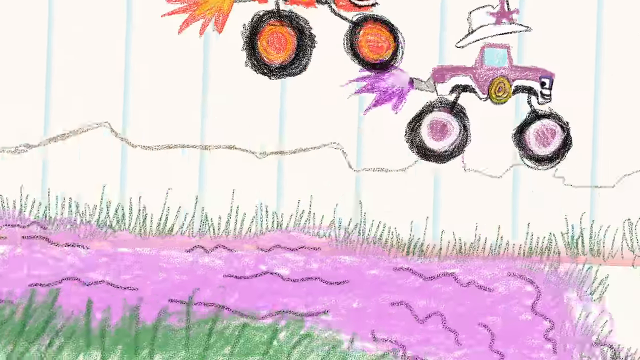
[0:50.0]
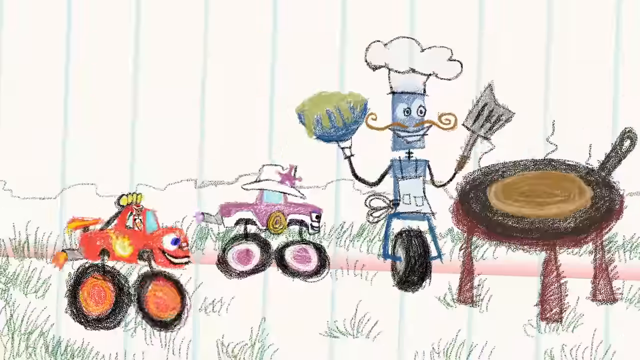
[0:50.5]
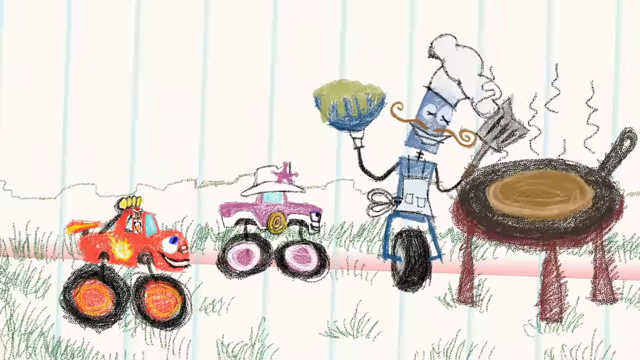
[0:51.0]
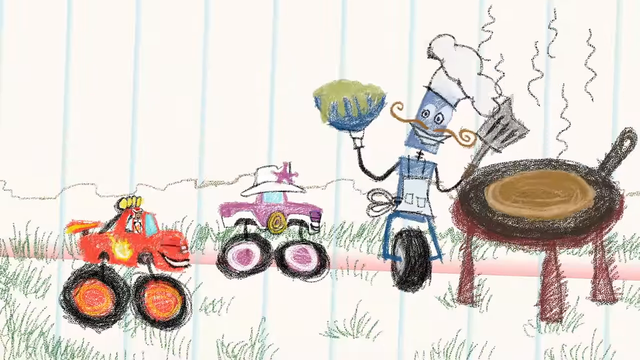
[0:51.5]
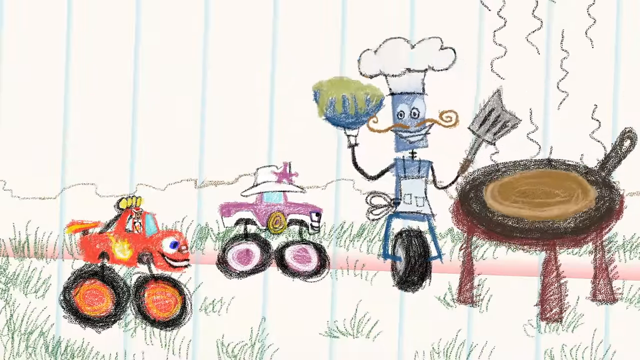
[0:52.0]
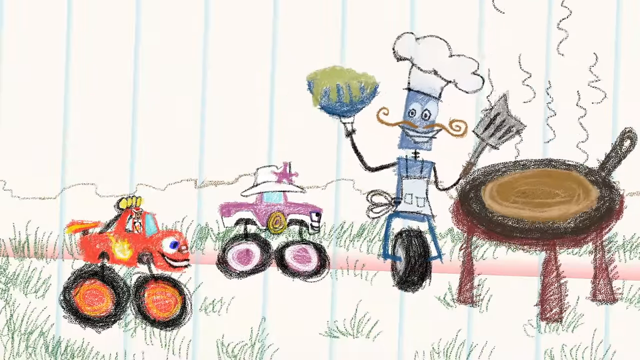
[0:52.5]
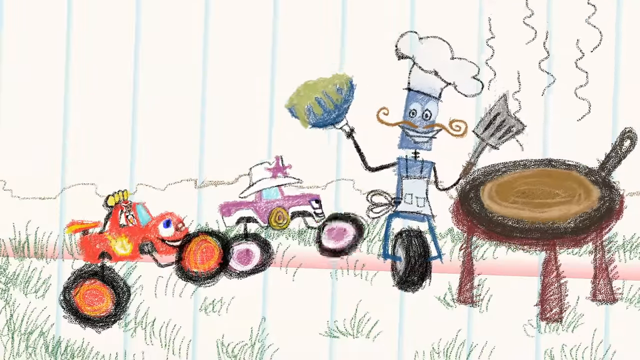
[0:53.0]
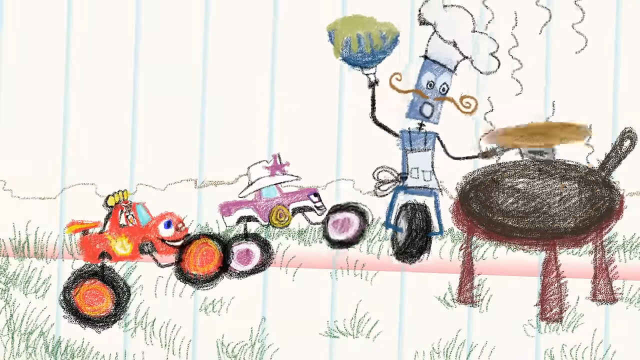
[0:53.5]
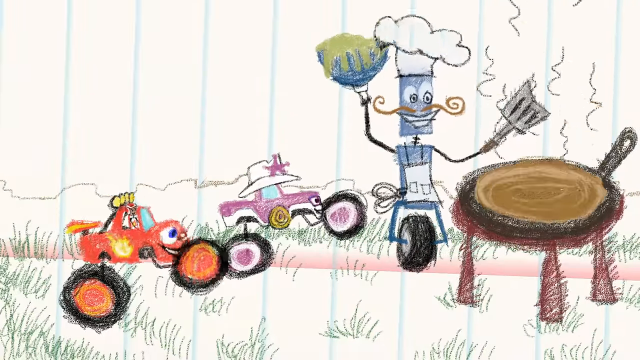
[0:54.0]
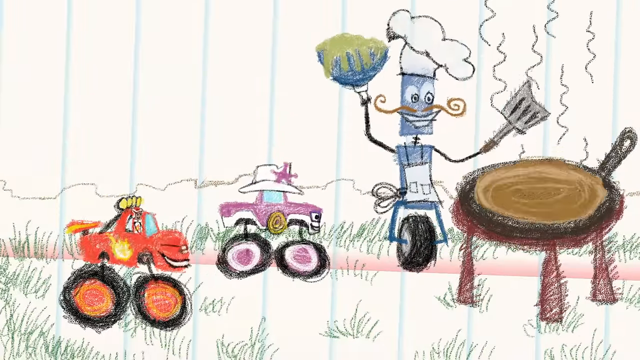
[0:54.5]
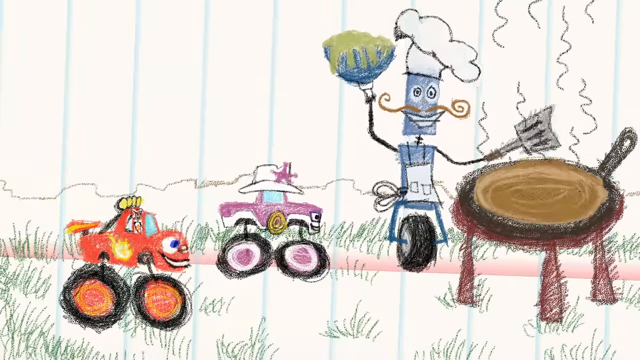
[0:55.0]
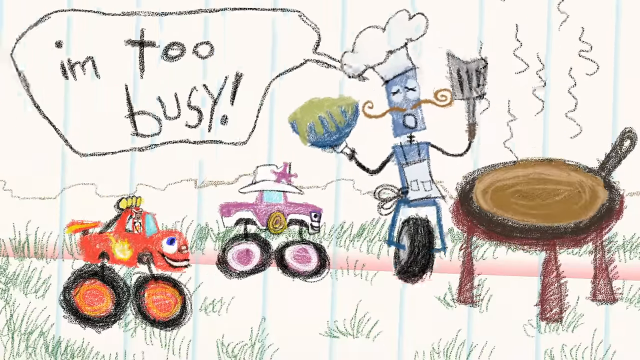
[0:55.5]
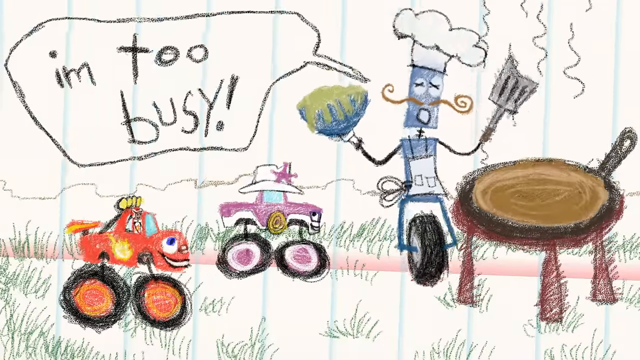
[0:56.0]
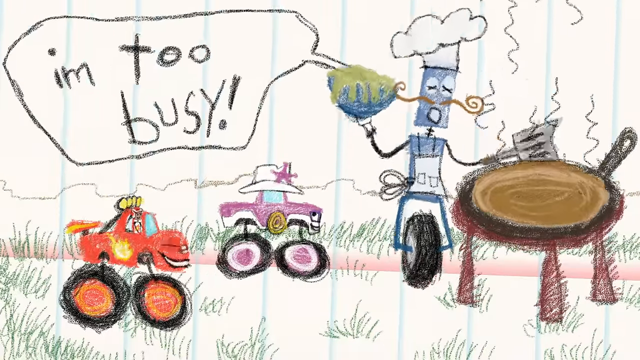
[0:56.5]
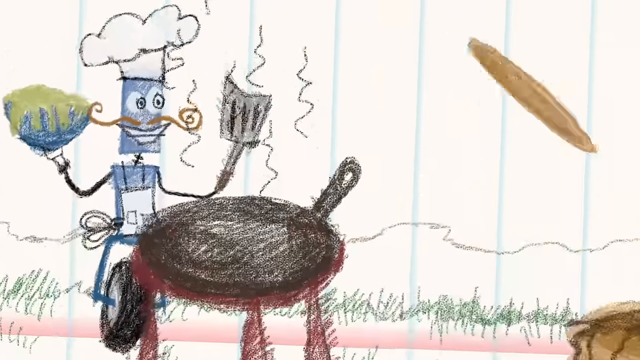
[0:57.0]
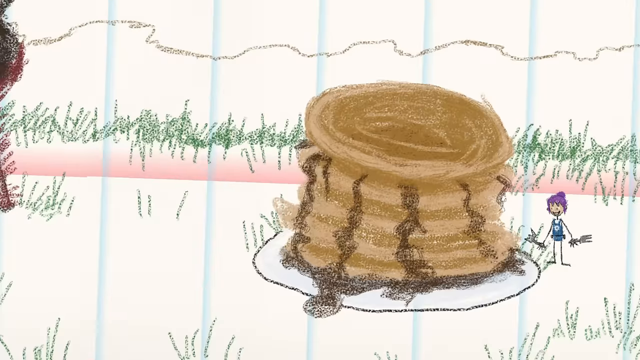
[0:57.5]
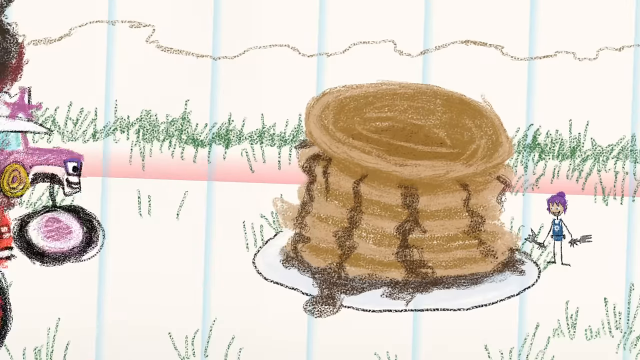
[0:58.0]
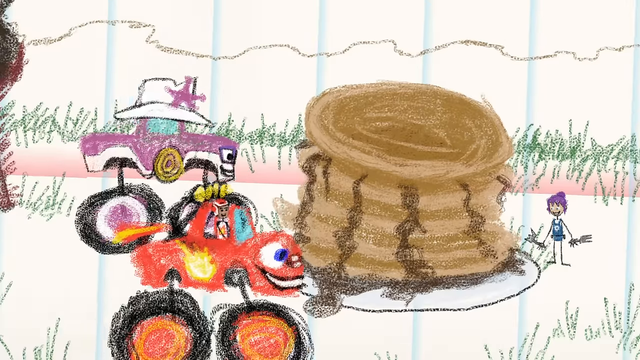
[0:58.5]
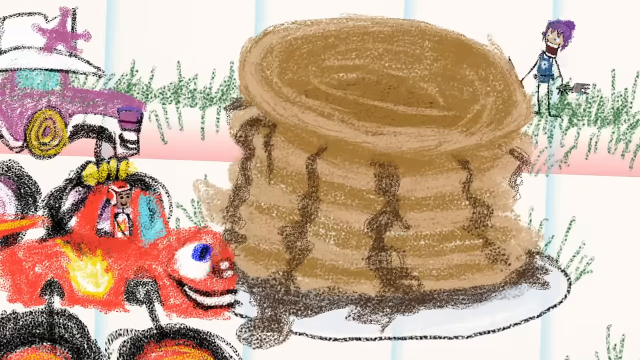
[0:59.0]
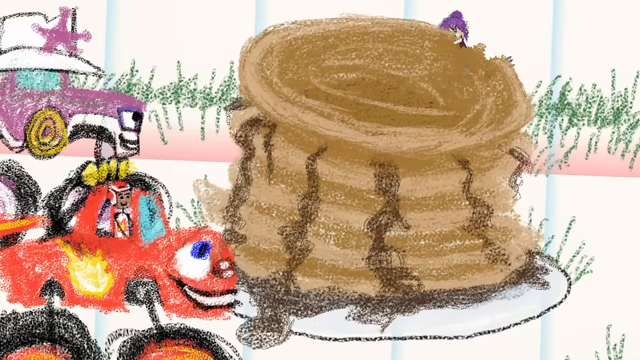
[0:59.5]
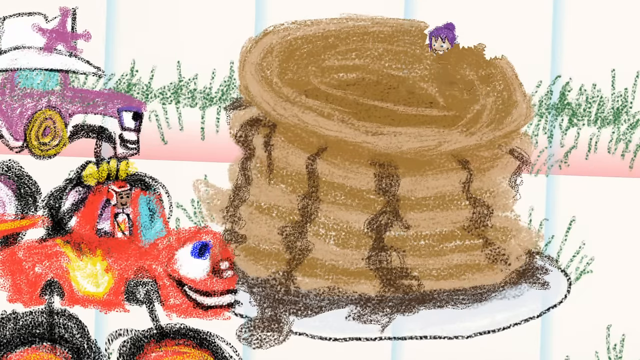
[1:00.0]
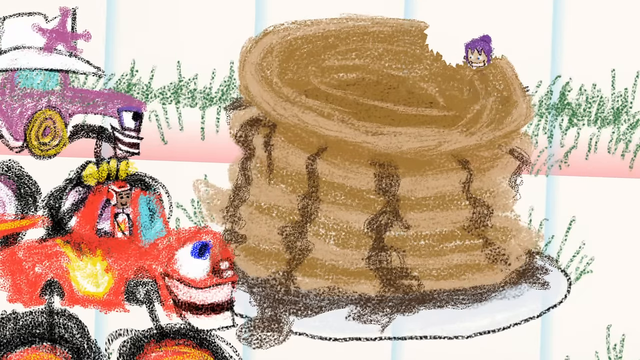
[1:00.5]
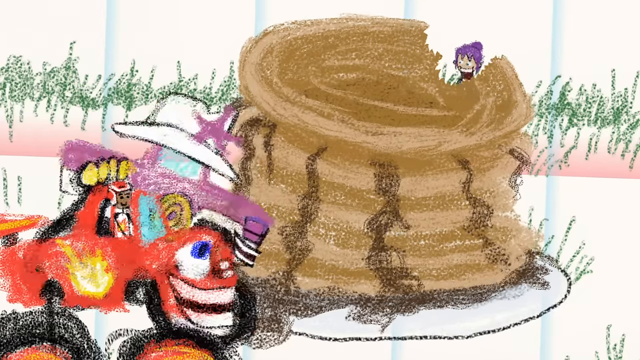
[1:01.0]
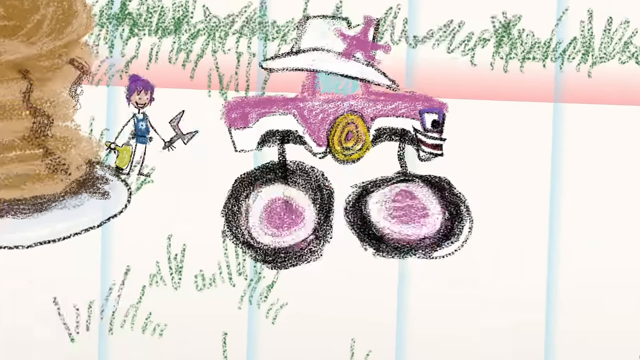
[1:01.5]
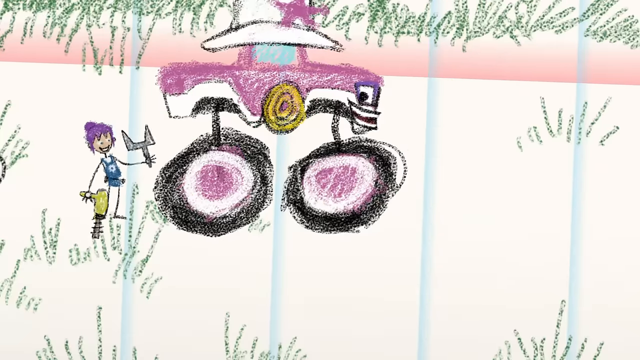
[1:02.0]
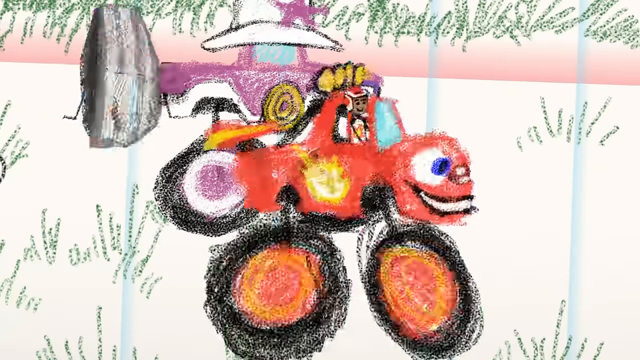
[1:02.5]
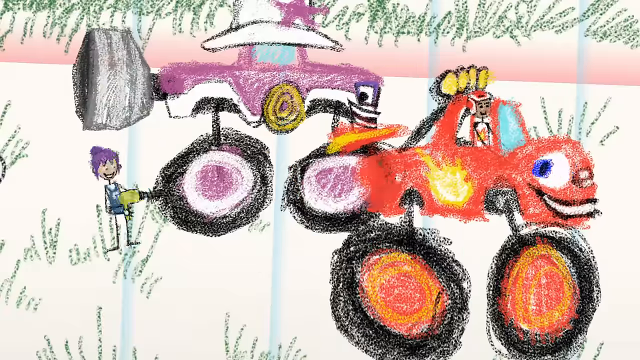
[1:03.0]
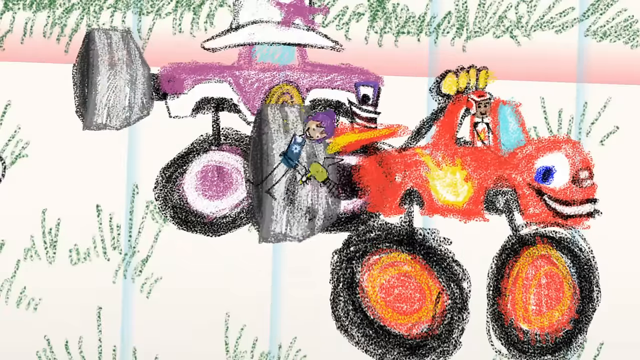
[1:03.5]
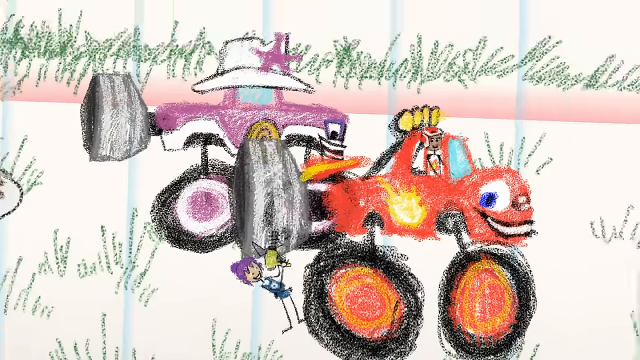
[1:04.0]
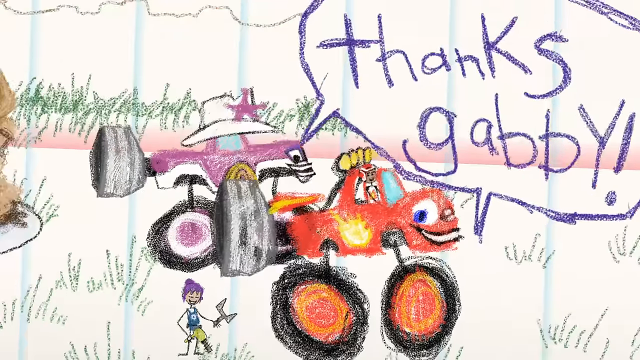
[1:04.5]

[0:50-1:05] The trucks come to a chef who is like a unicycle, grilling and cooking food. He appears to be making a big pancake on a big skillet, which he flips onto a stack of other pancakes. The trucks ask for something, and the chef says "I'm too busy." A little, almost fairy-like girl comes up with a wrench; she first takes some bites of pancakes and then fixes the trucks. They say "thanks Gabby," leave, and continue their adventure.